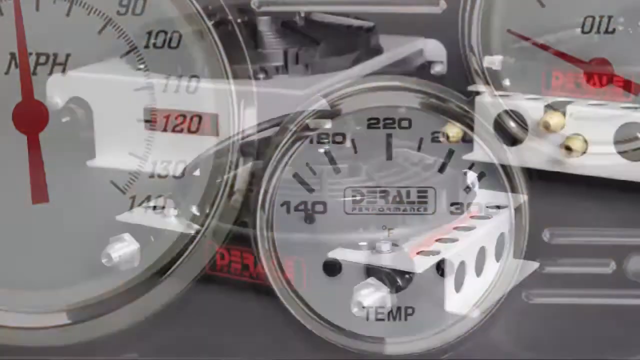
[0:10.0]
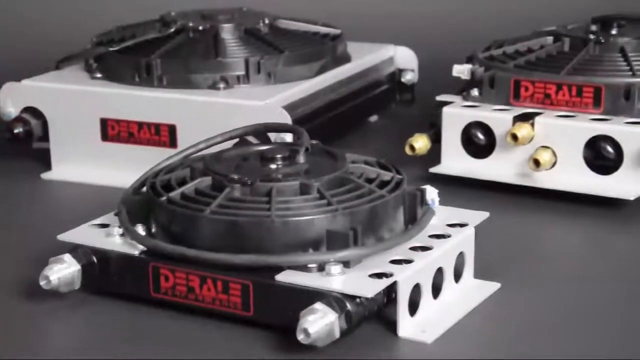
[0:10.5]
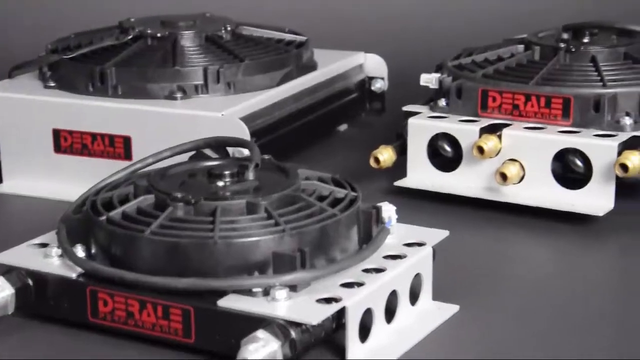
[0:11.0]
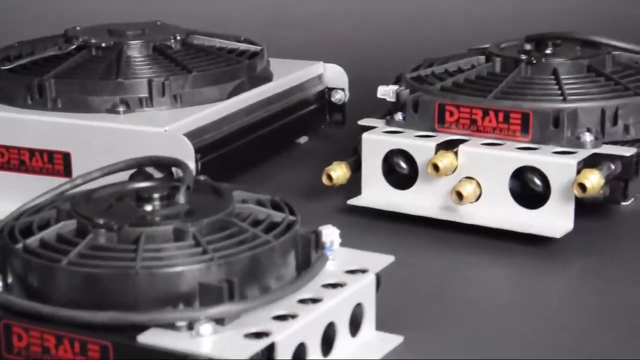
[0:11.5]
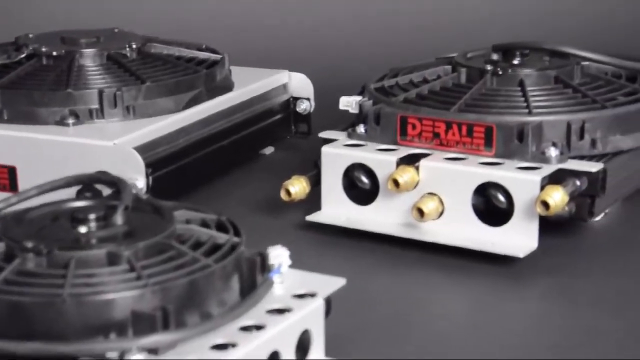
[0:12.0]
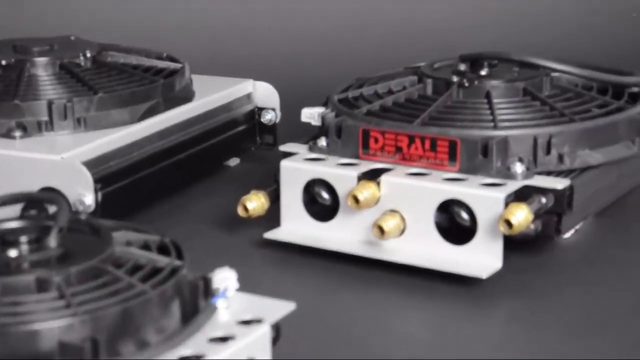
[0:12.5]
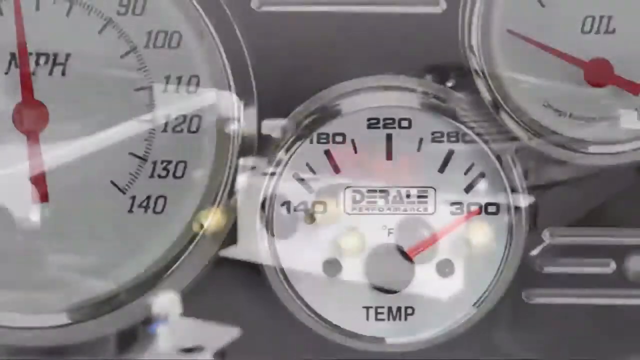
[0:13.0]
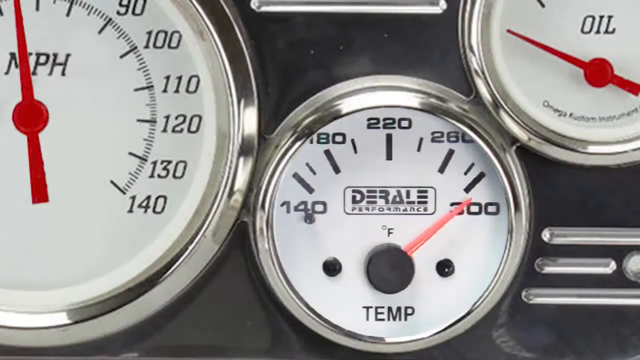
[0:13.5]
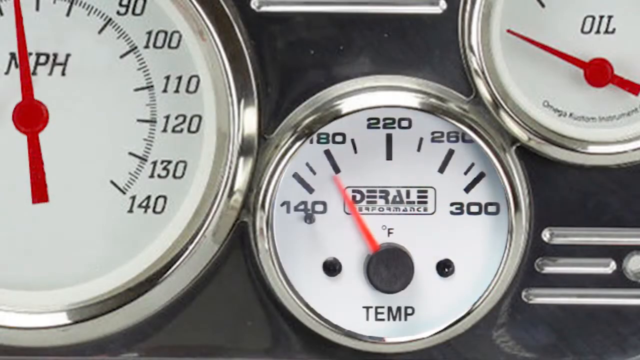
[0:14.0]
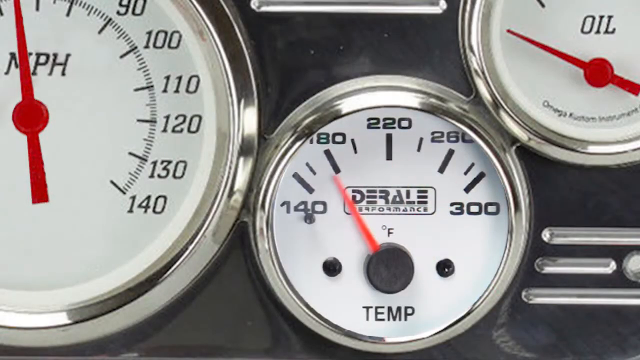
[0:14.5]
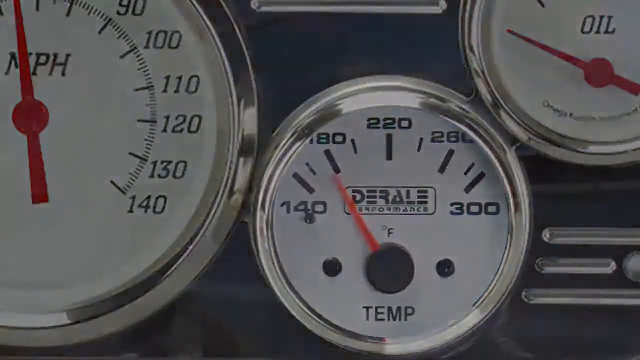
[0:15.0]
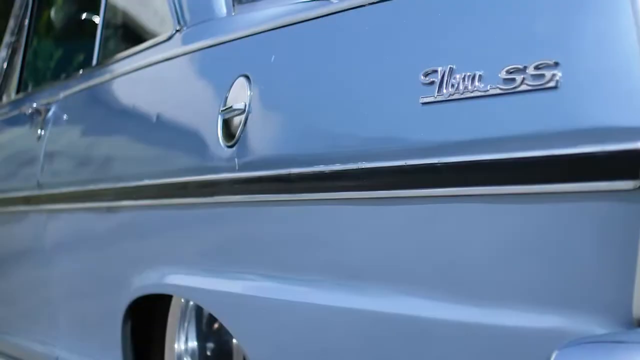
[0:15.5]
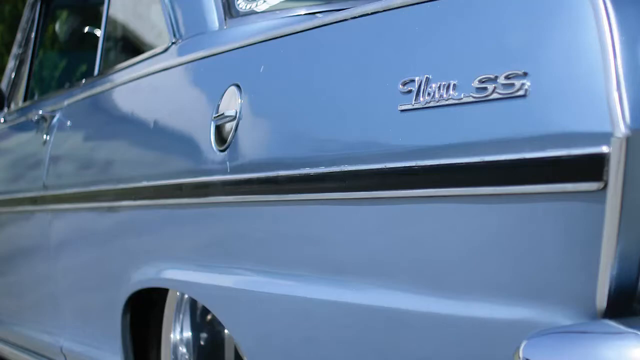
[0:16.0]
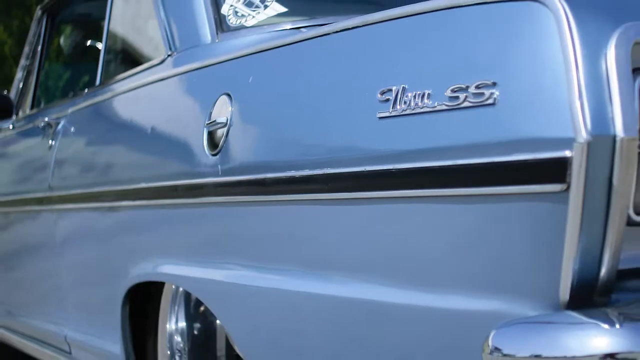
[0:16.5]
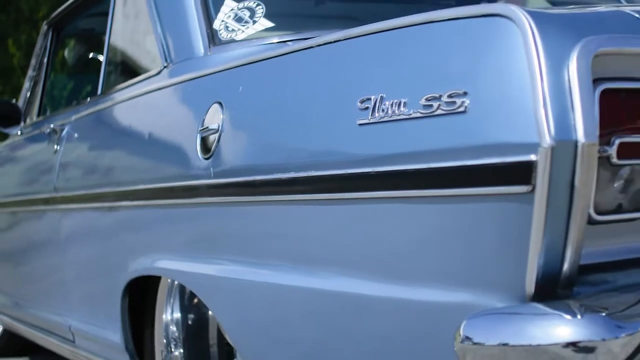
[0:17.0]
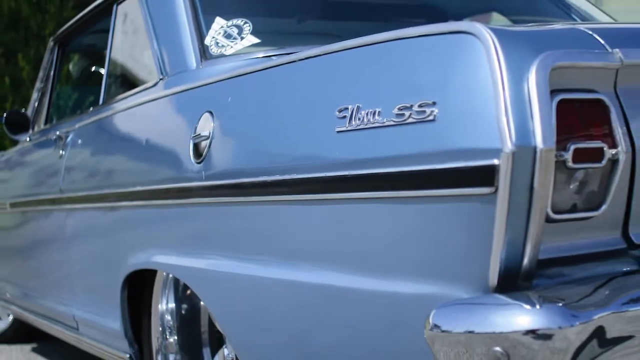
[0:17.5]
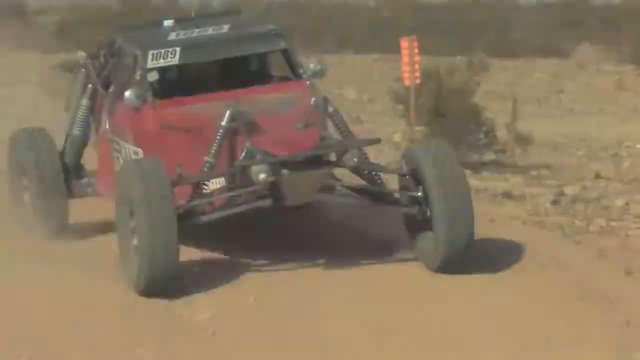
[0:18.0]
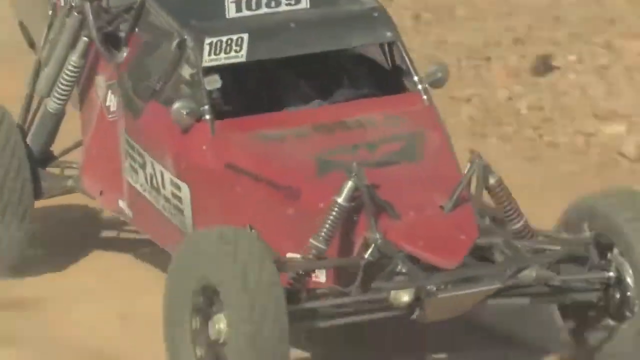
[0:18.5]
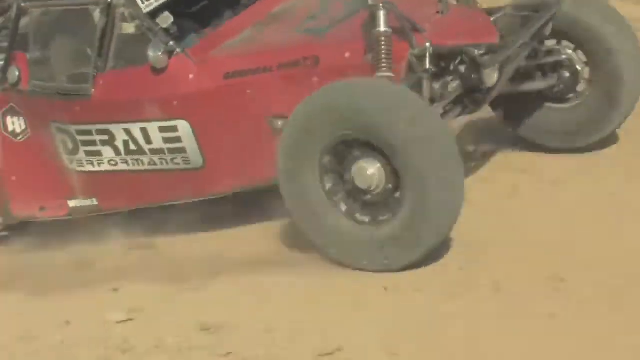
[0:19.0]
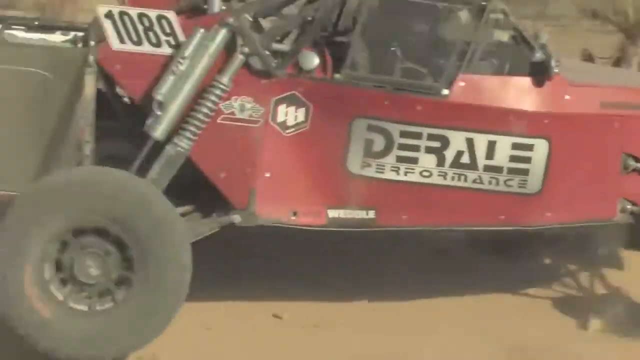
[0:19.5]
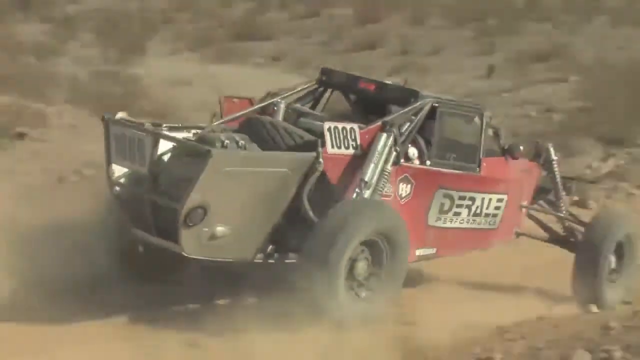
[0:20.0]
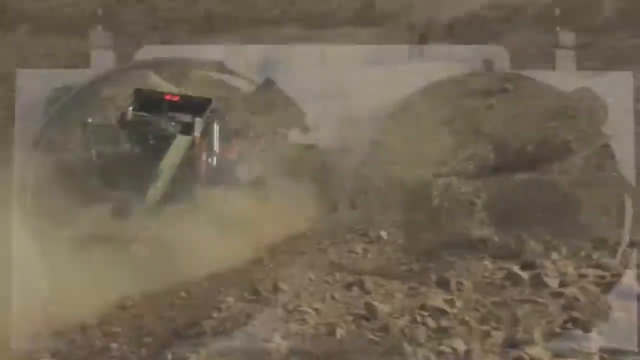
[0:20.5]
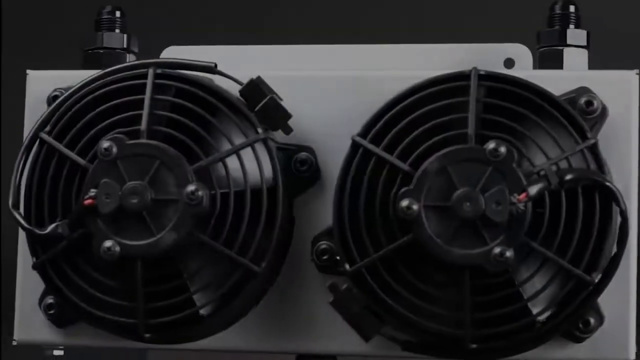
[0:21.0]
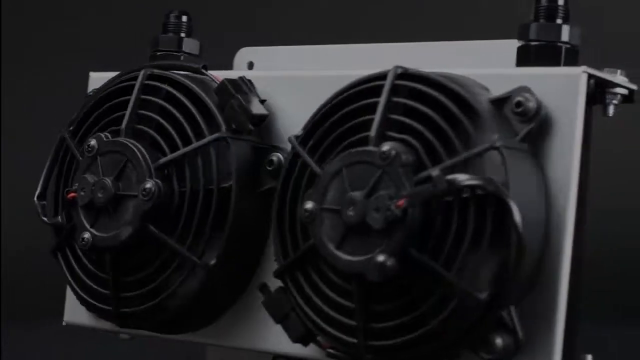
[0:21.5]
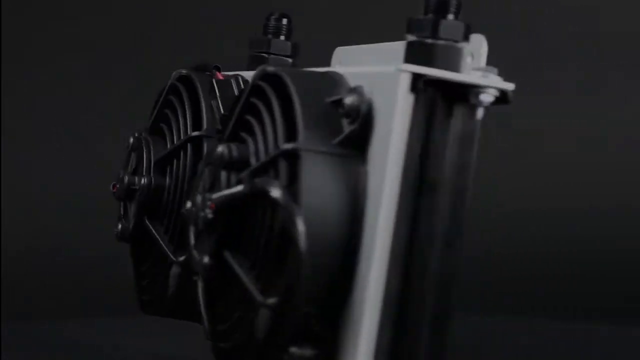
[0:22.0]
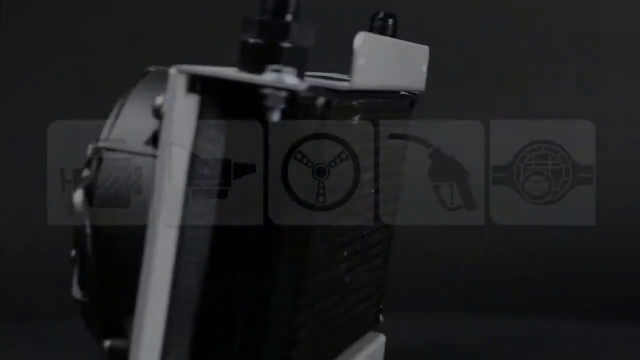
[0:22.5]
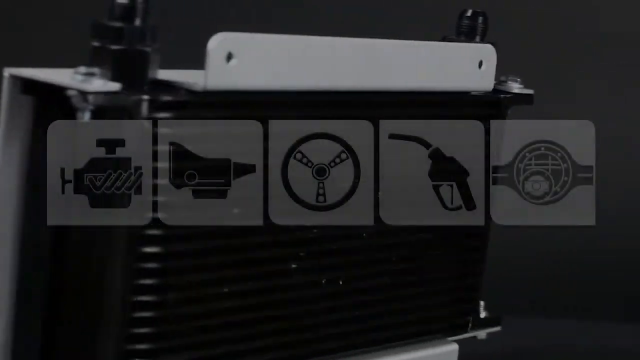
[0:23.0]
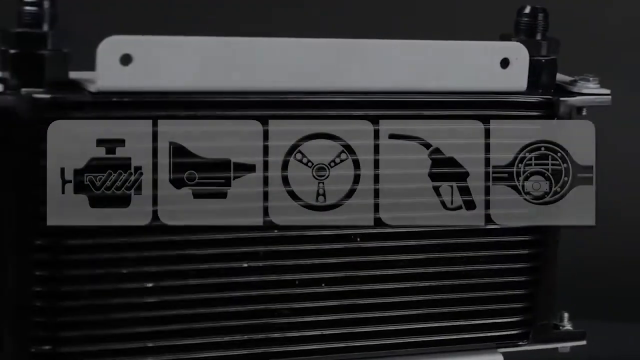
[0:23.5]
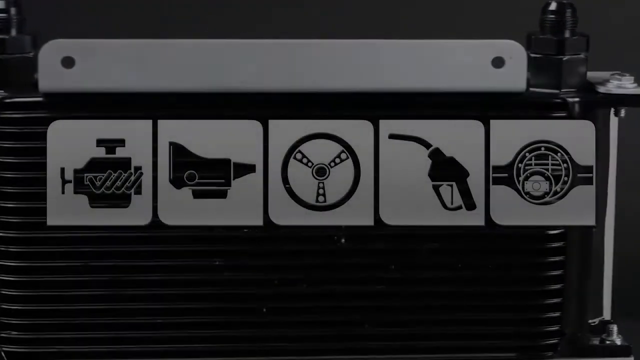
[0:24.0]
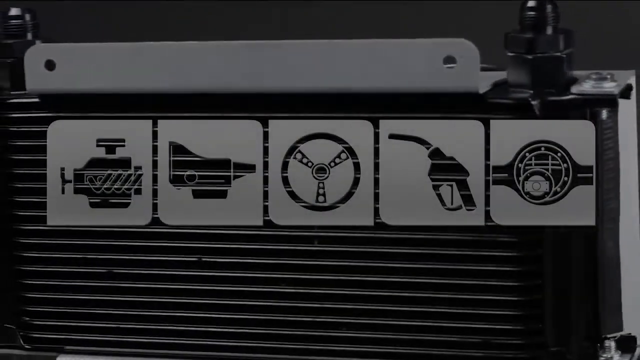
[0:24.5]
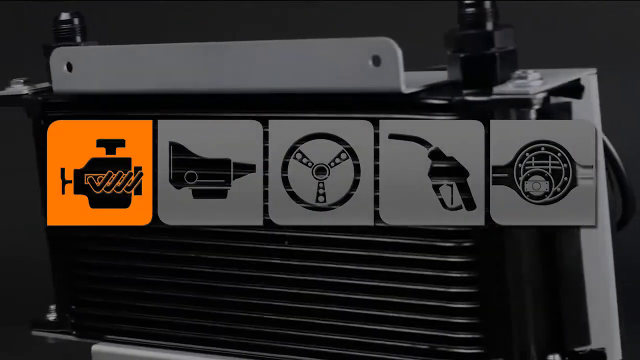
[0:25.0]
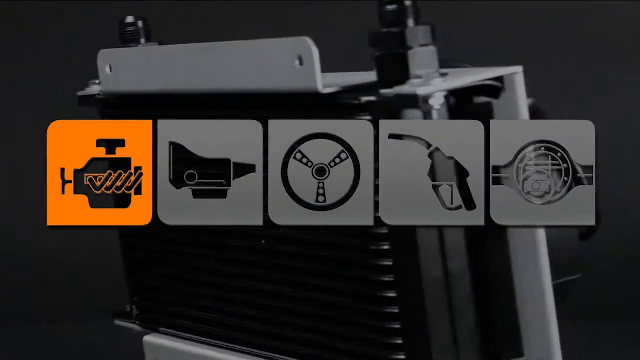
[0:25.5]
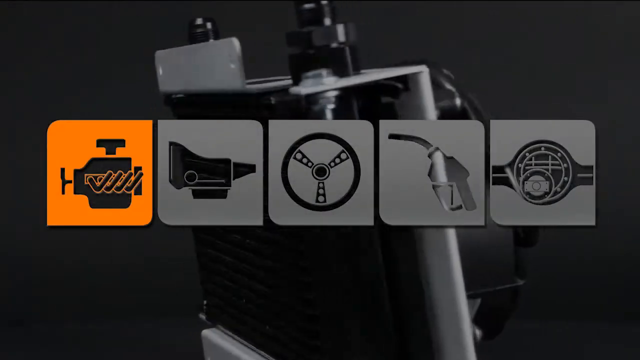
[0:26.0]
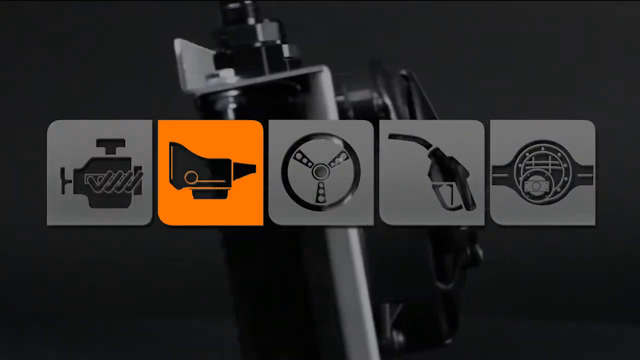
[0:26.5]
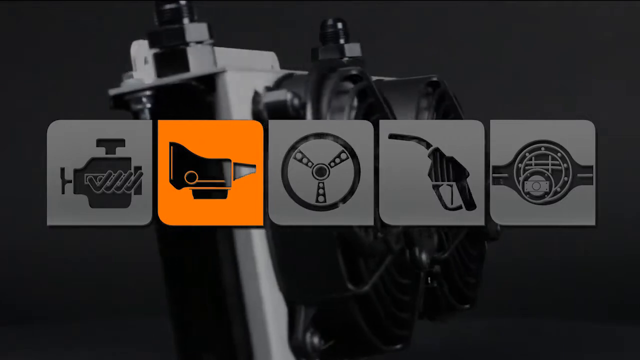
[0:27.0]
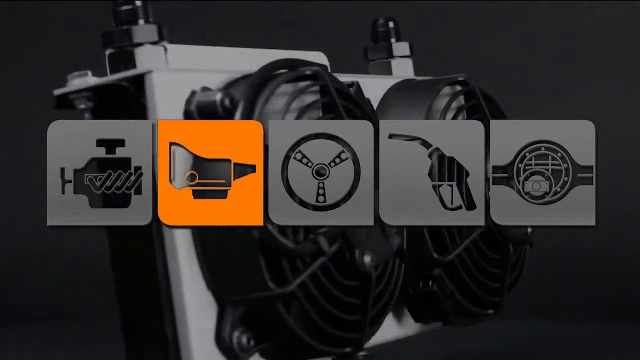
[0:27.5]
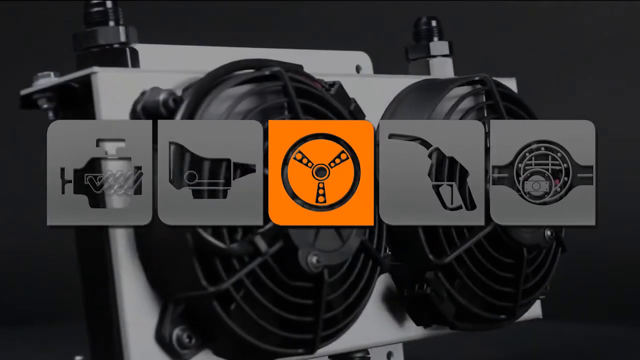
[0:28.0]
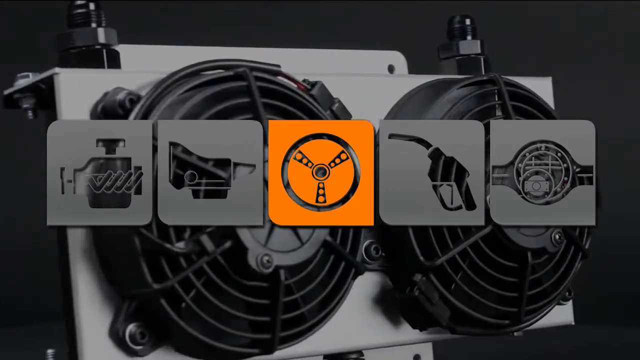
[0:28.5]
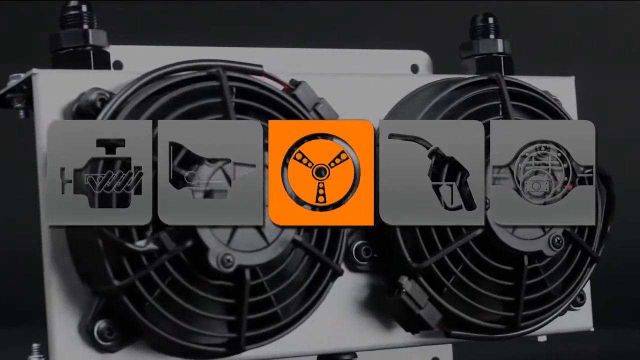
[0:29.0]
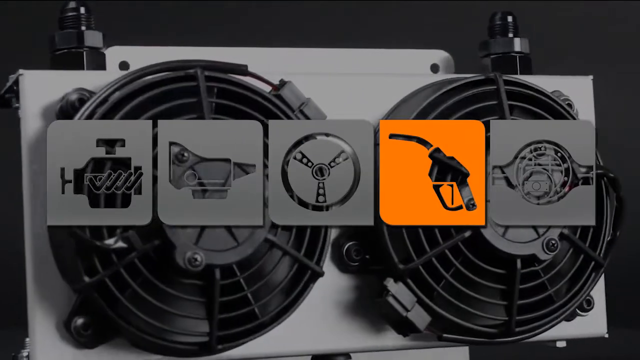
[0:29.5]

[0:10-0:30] The scene begins at the temperature levels, then the D-Rail machines appear, apparently some sort of temperature machines whose function is hard to tell. They have many ports that seem able to connect some kind of cable. The temperature then lowers. An old blue car appears, followed by a red car that seems to be a kind of derby car, maybe for some sort of rally; the car has the D-Rail on its side. The D-Rail product is shown once more; it is unclear what it is, but it seems to have something to do with cars, possibly lowering a car's temperature. A motor sign, a wheel sign and a gas sign appear, and the sequence ends. It seems to be a product for car performance.